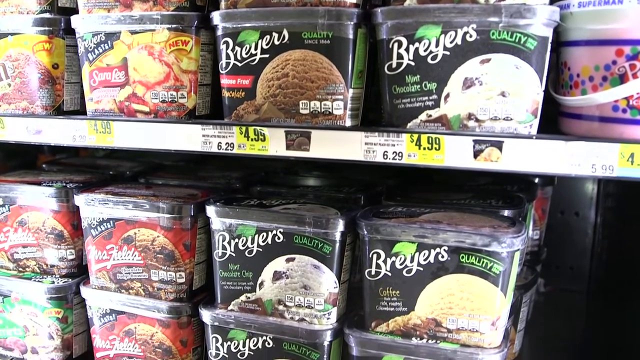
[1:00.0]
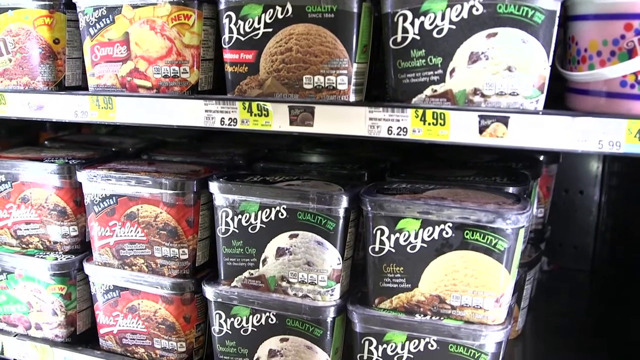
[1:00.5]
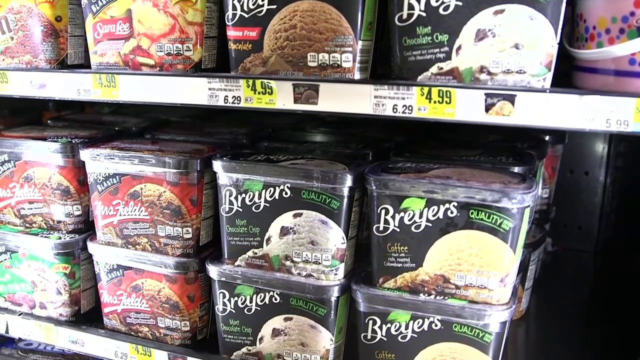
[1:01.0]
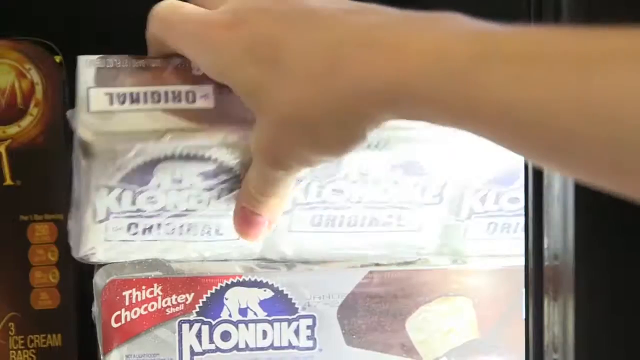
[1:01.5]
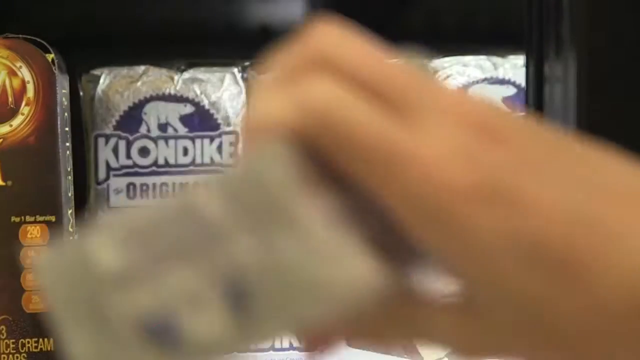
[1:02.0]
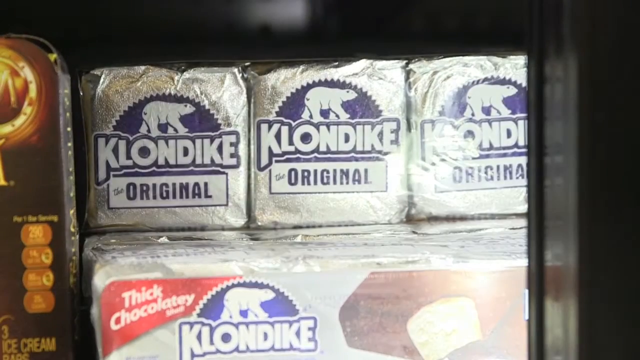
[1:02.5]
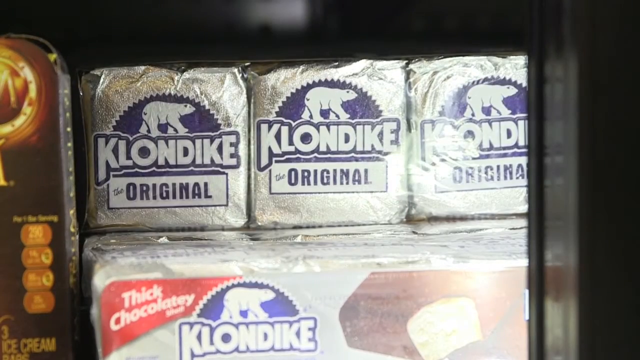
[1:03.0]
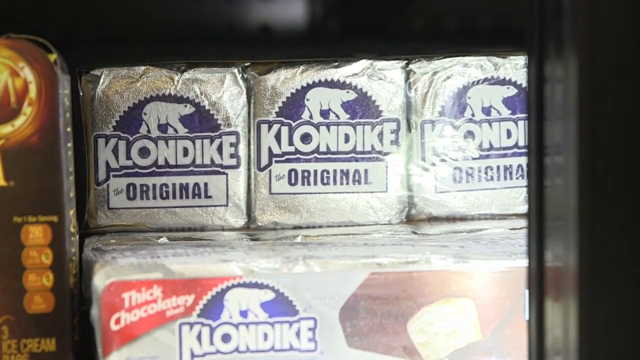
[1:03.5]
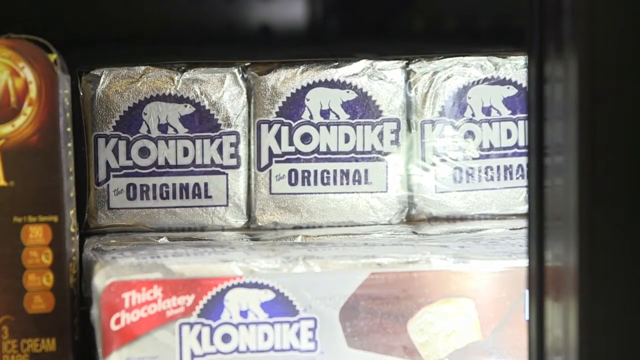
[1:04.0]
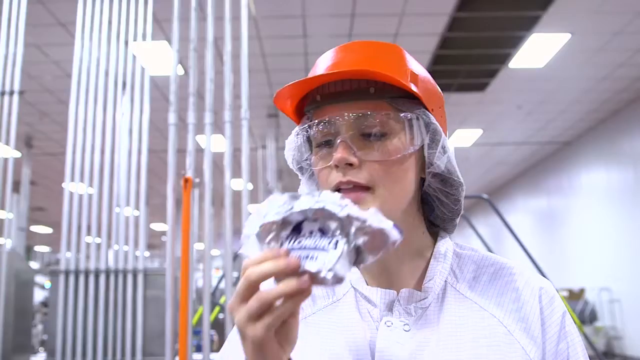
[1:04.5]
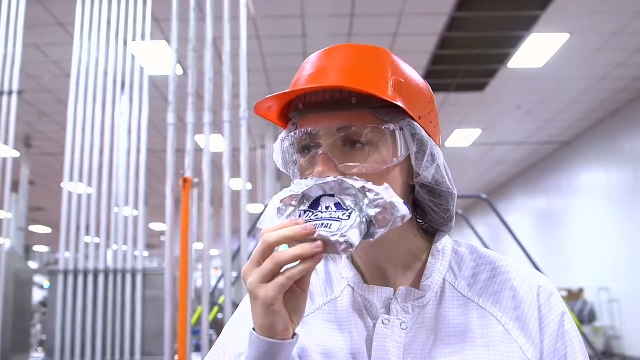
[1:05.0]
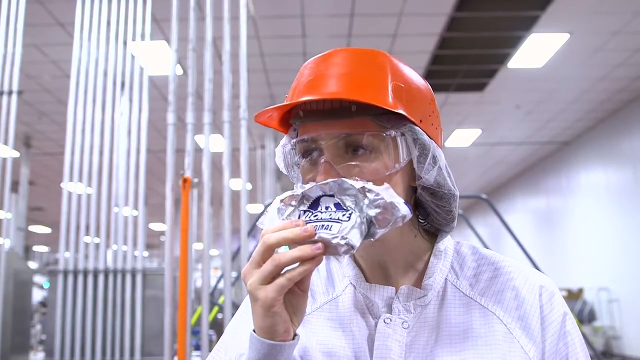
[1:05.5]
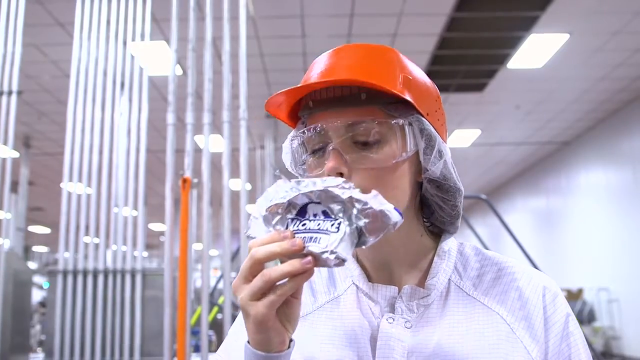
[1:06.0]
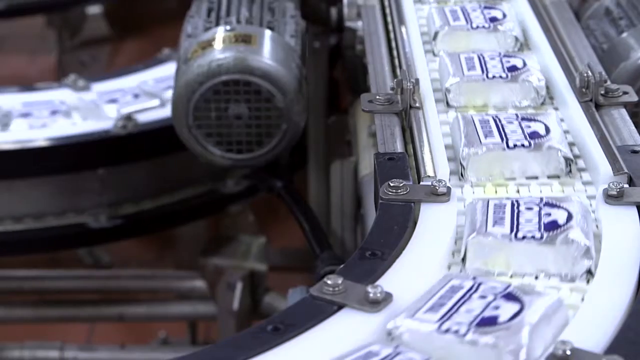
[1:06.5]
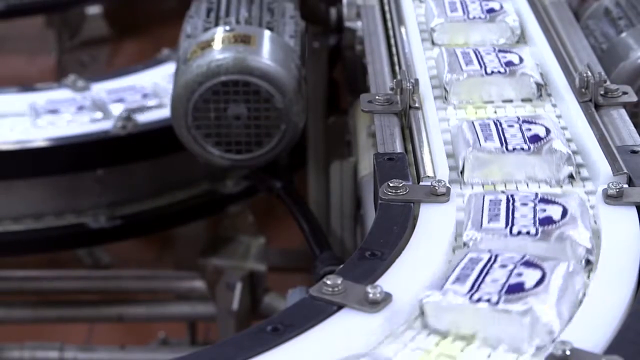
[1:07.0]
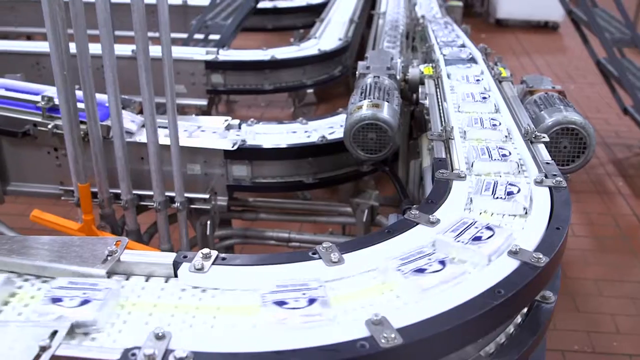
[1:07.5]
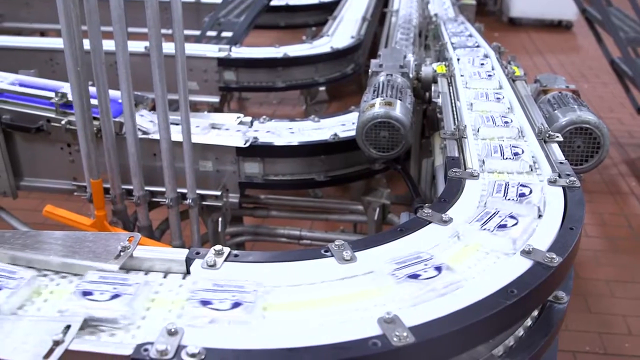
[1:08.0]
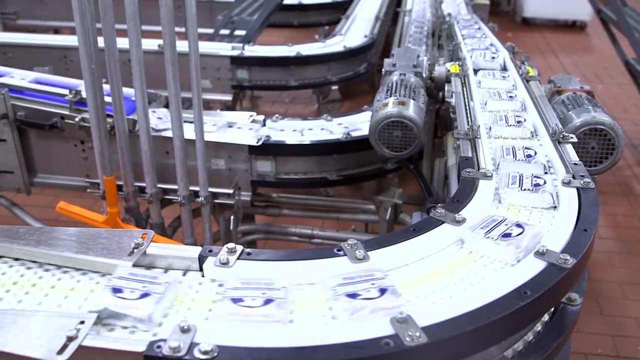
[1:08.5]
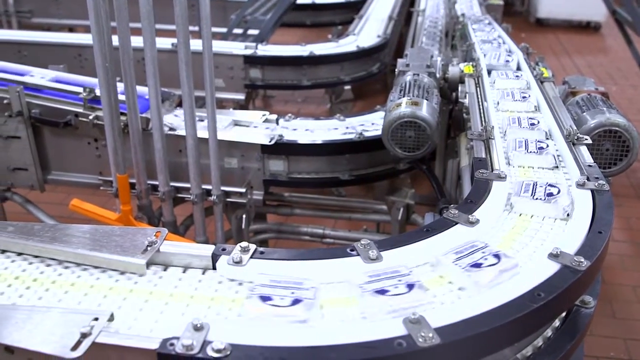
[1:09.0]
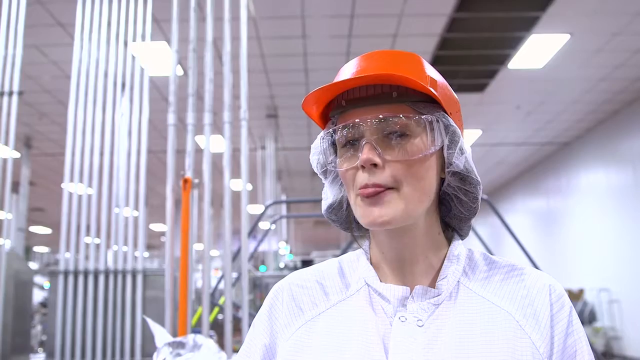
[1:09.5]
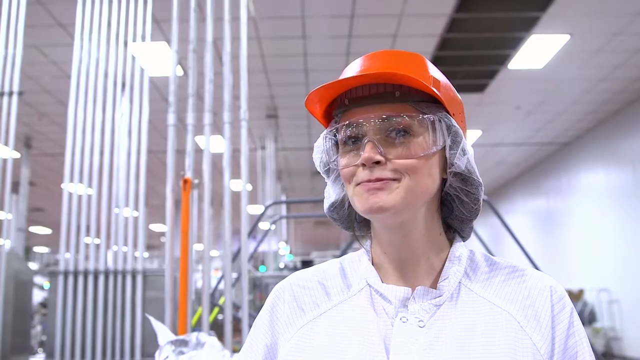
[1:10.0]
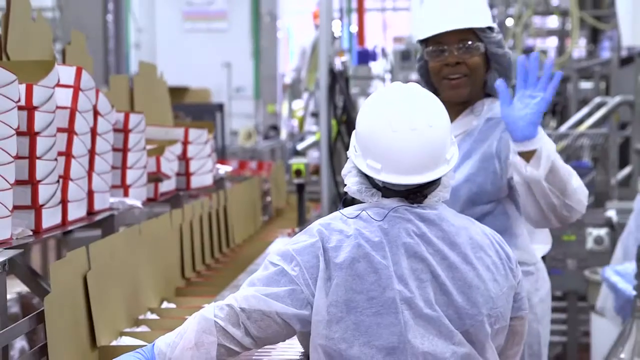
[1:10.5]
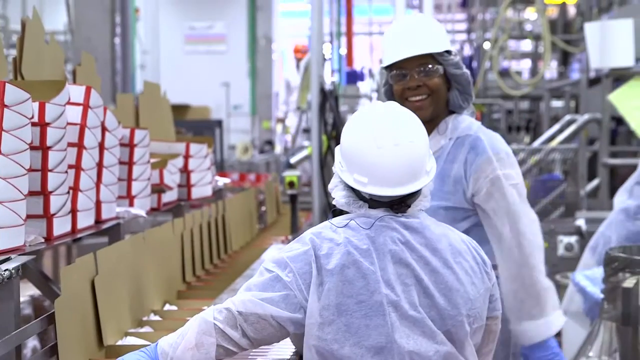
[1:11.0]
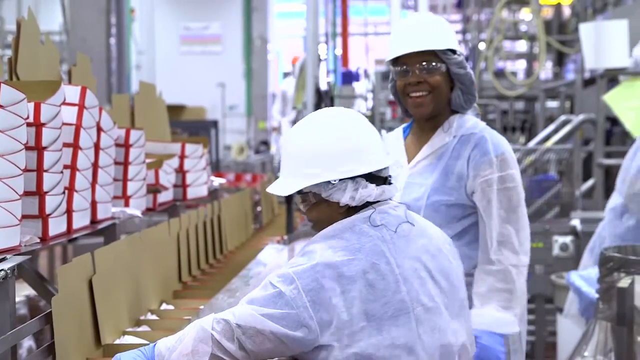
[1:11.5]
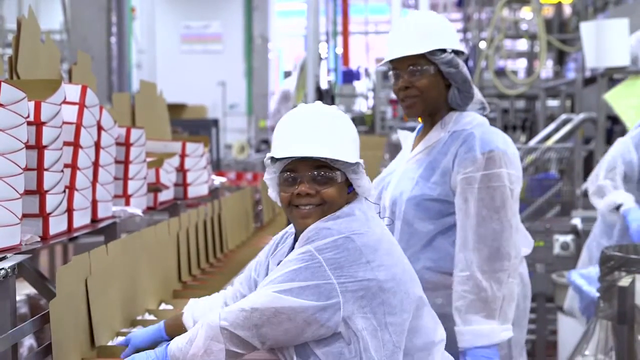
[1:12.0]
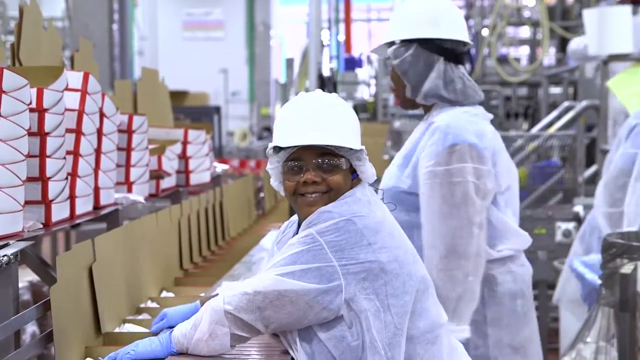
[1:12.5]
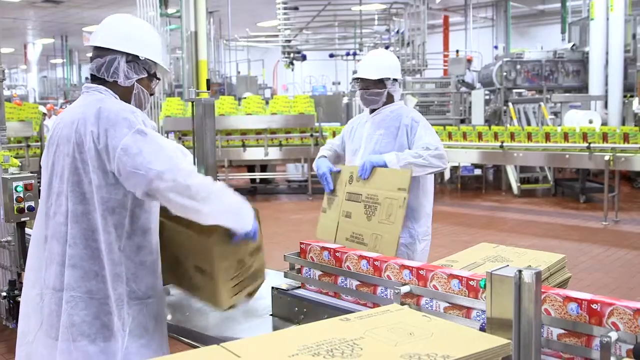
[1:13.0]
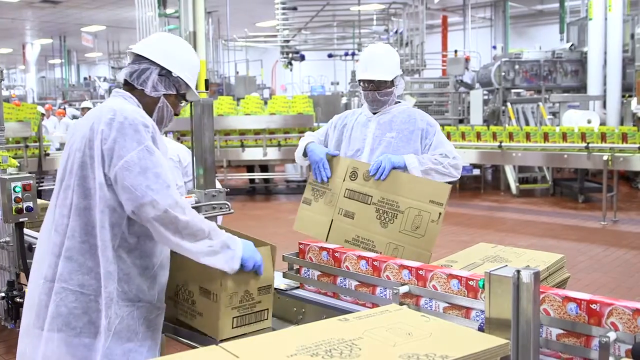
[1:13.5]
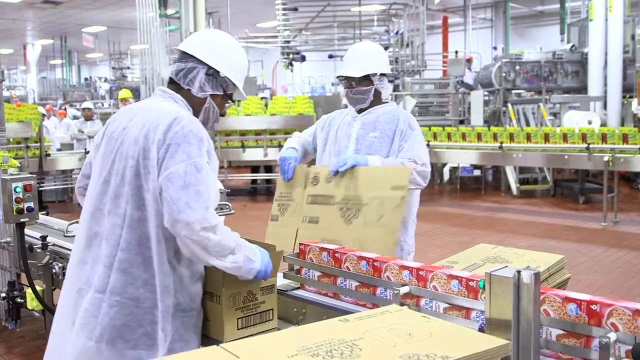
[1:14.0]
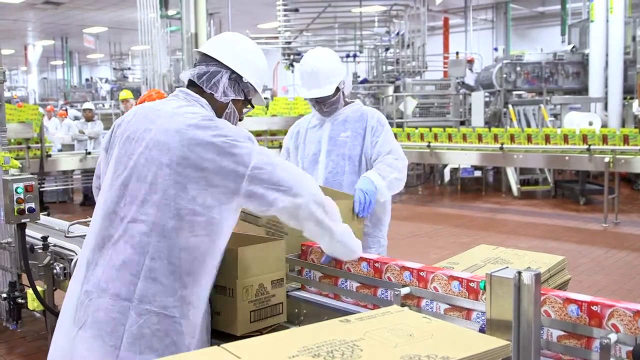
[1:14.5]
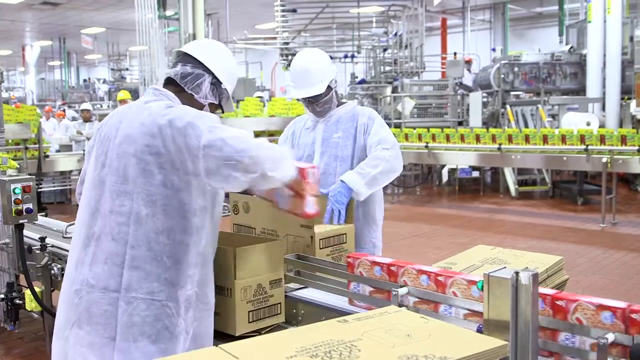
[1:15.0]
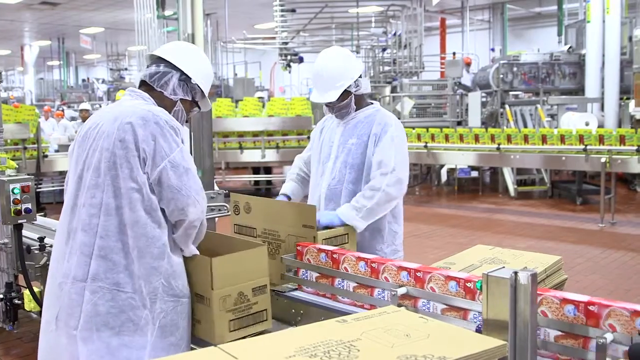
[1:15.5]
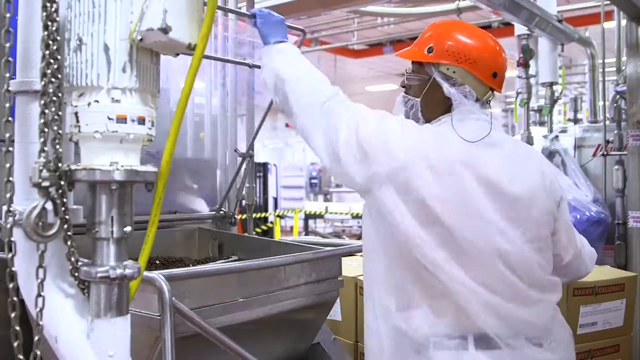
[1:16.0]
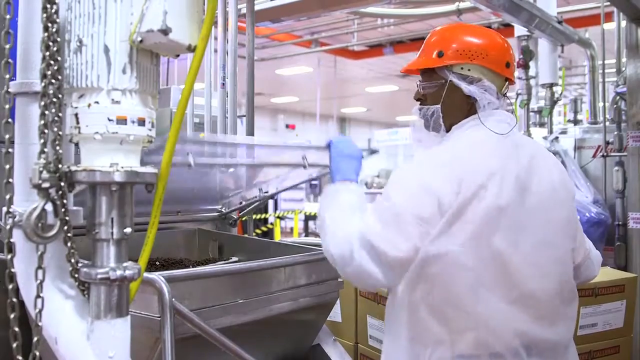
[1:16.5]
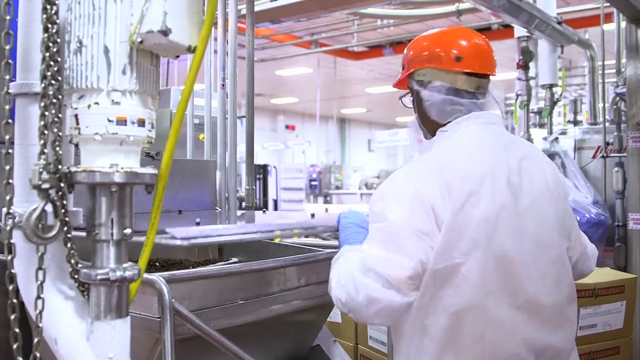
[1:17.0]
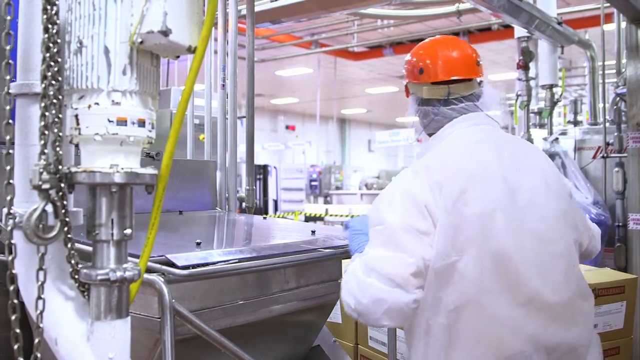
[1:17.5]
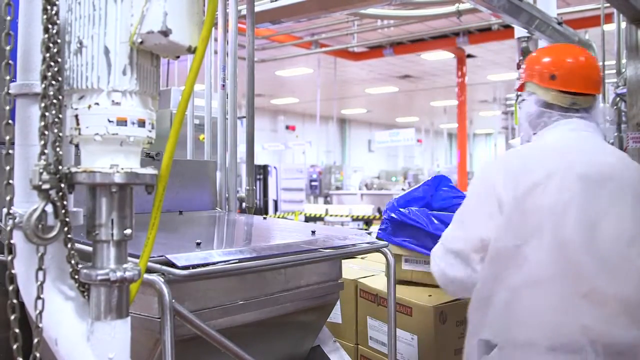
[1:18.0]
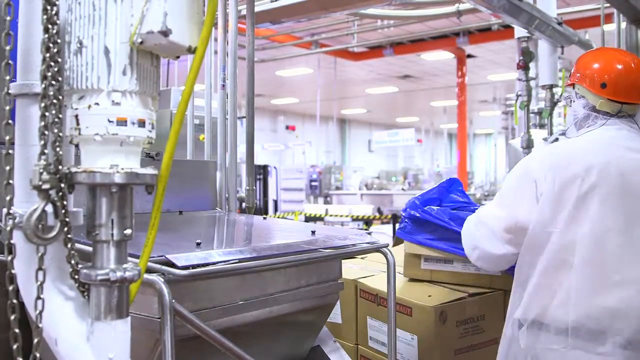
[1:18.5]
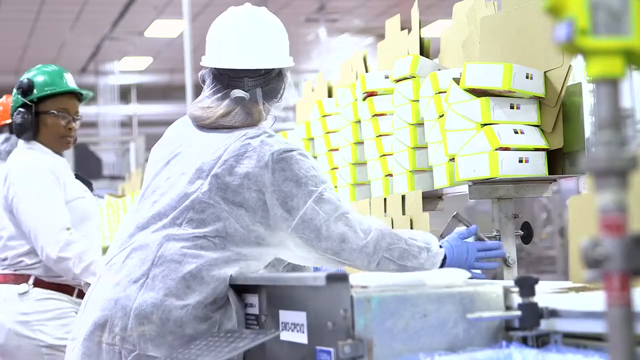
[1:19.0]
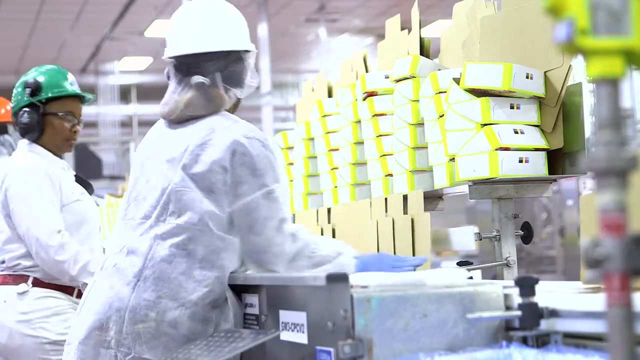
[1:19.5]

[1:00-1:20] The scene transitions to a grocery store, where a shopper, who appears to be female, reaches for what appears to be a Breyers ice cream, which has 110 calories per serving. Right next to it appears to be an off-brand ice cream. Several other ice creams are visible, such as Blue Bell, Nestle and Blue Bunny. The aisle is listed as number 15 and holds eggs, cheese, fresh juice, ice cream and whipped topping. The camera zooms in on the Popsicle brand: sugar-free, orange, cherry and grape. The Popsicles appear to be red, purple and orange, with the fruits displayed next to them. On the right side are Fudgsicles with 40 calories and the original Fudge Pops, whose box shows three brown Popsicles similar to fudge bars; these are 80 calories, with up to eight Popsicles in each box.